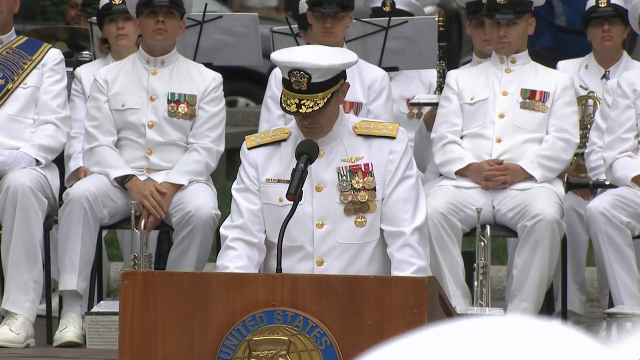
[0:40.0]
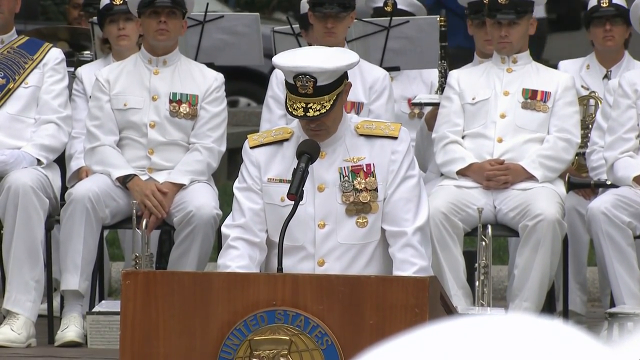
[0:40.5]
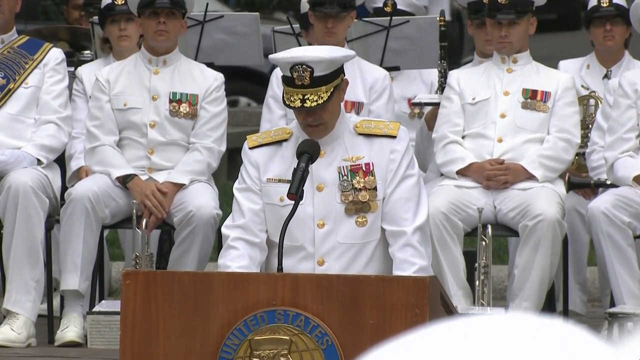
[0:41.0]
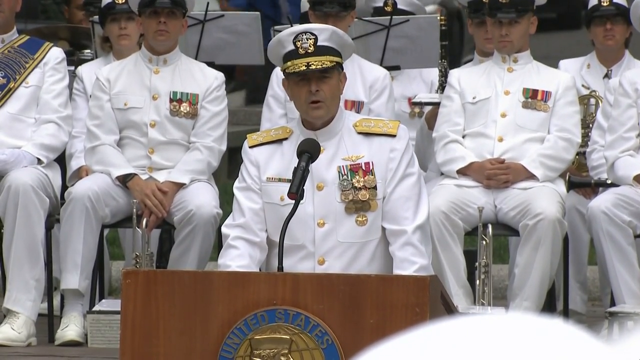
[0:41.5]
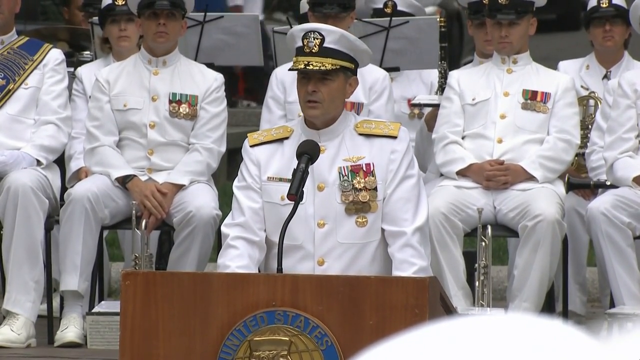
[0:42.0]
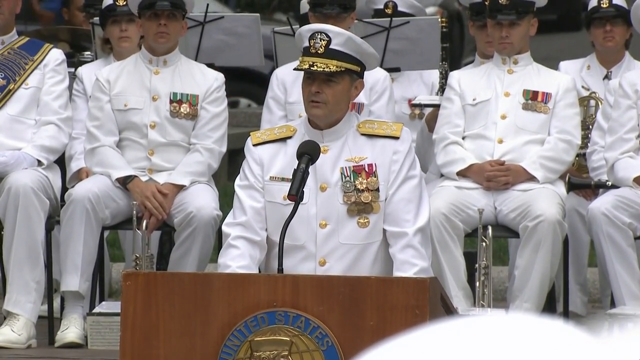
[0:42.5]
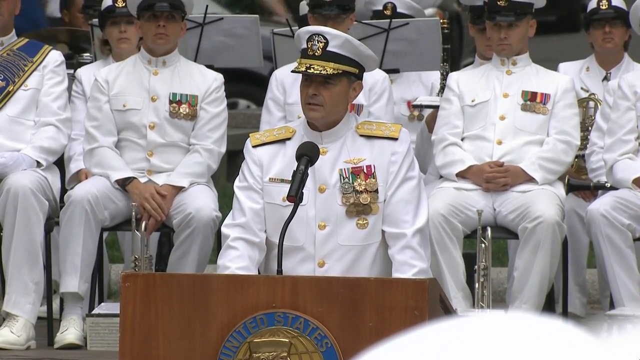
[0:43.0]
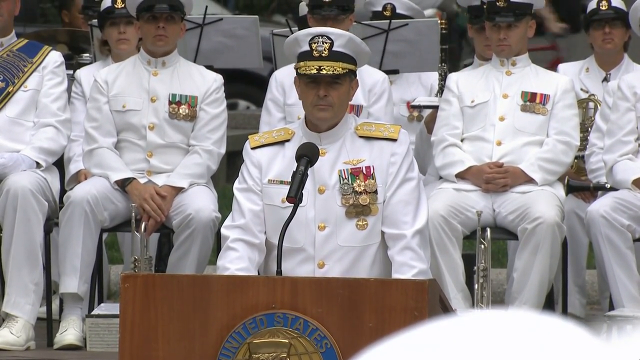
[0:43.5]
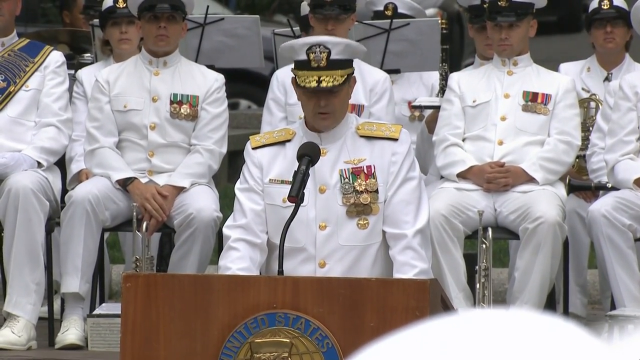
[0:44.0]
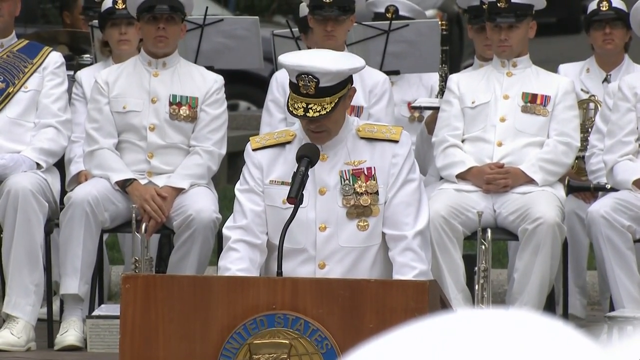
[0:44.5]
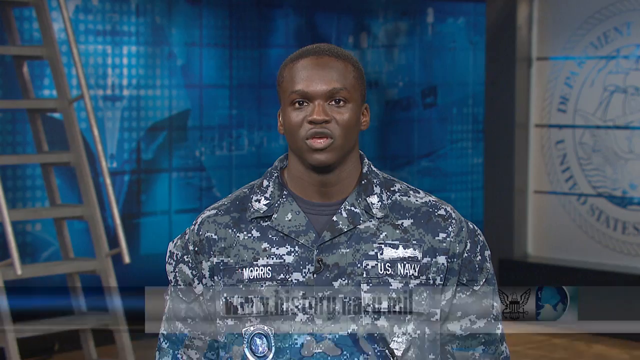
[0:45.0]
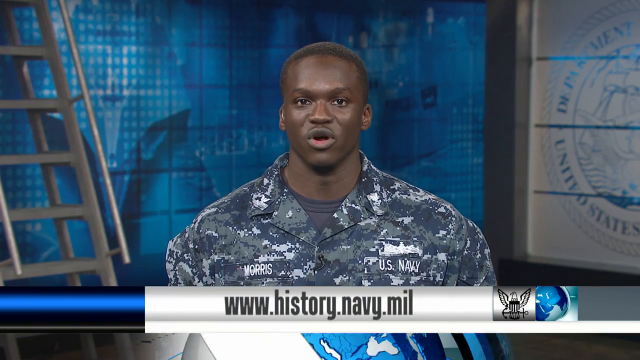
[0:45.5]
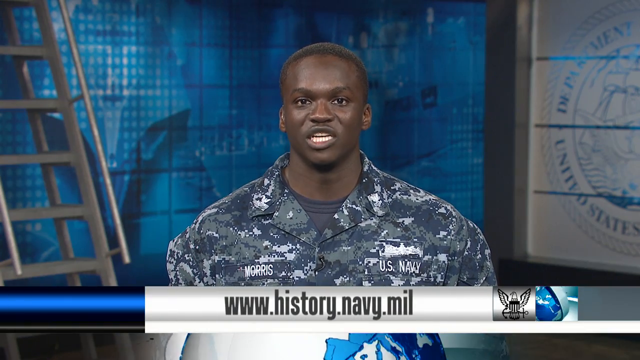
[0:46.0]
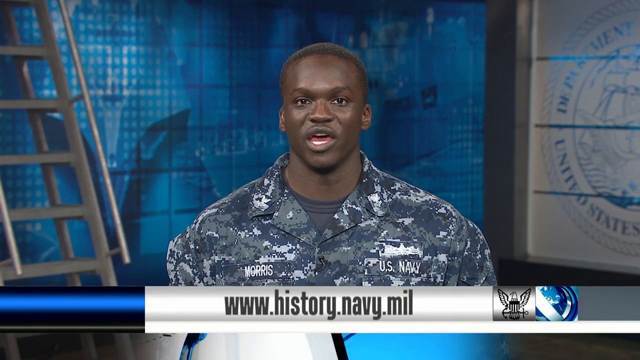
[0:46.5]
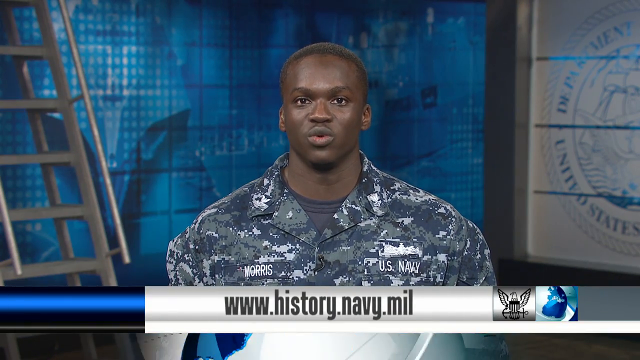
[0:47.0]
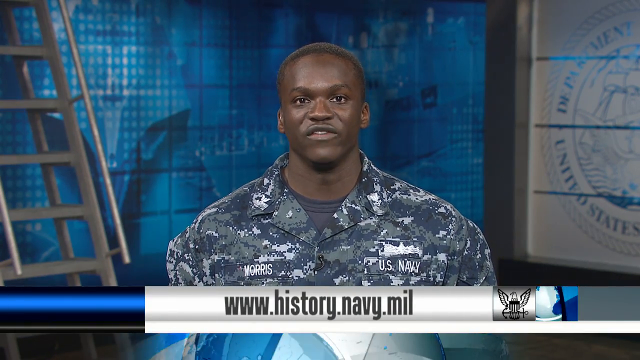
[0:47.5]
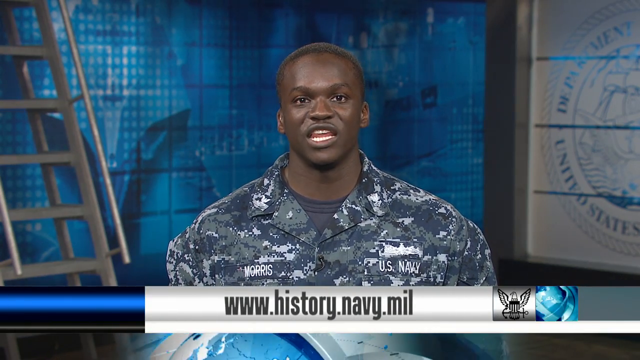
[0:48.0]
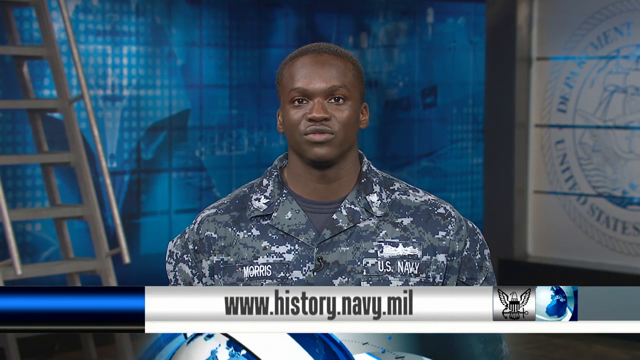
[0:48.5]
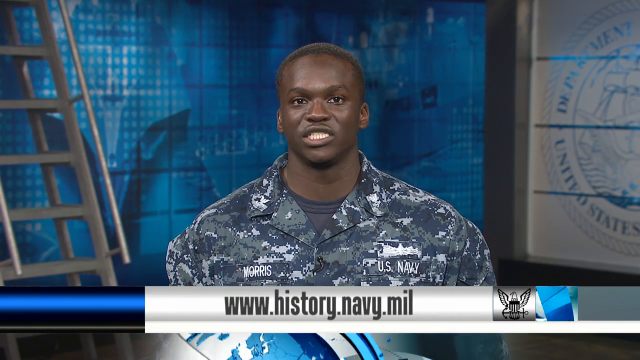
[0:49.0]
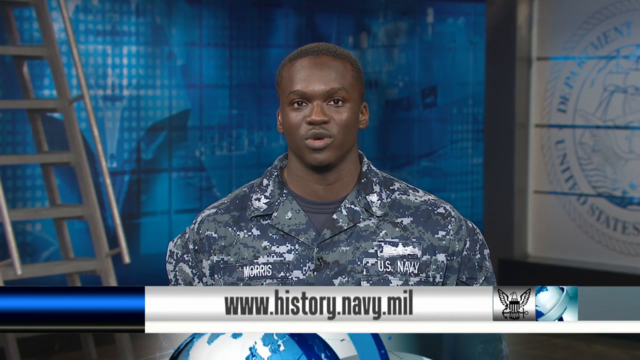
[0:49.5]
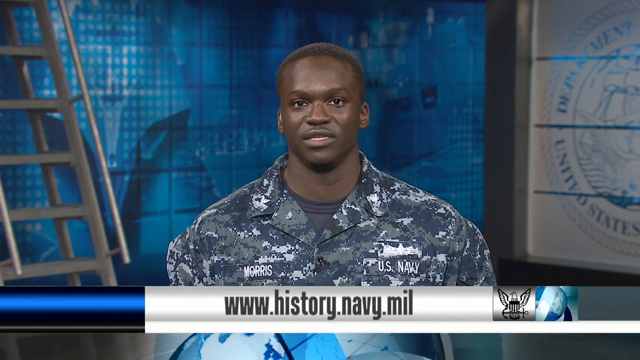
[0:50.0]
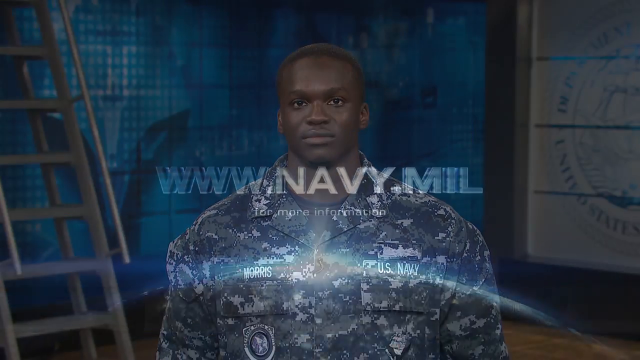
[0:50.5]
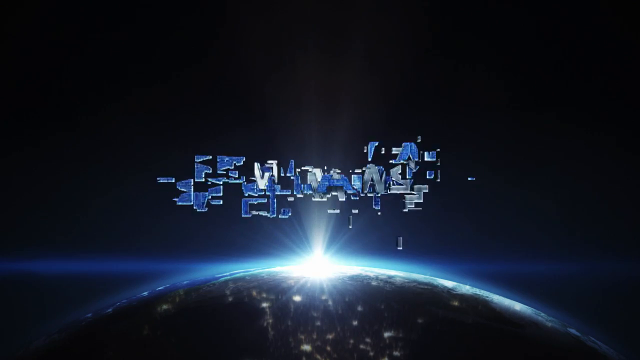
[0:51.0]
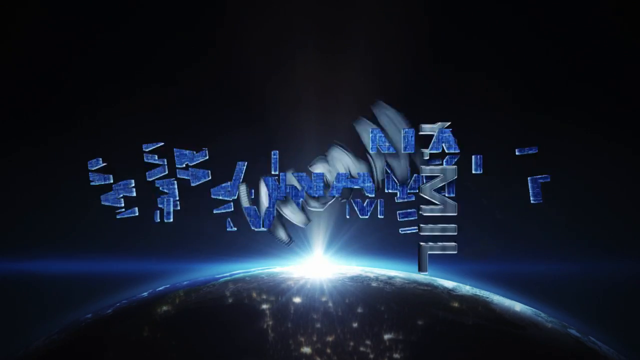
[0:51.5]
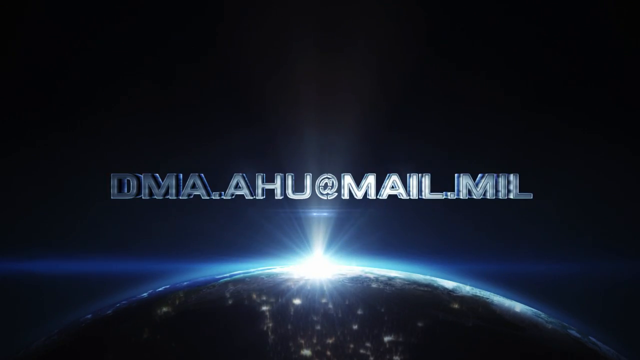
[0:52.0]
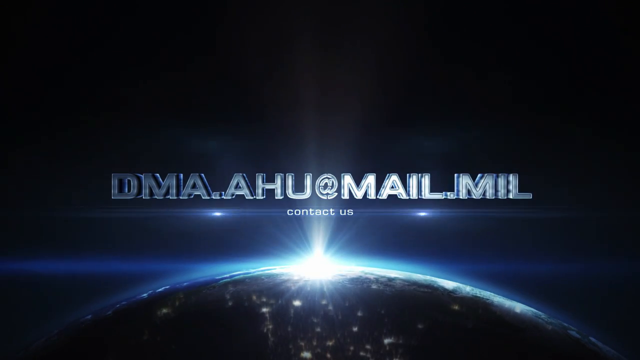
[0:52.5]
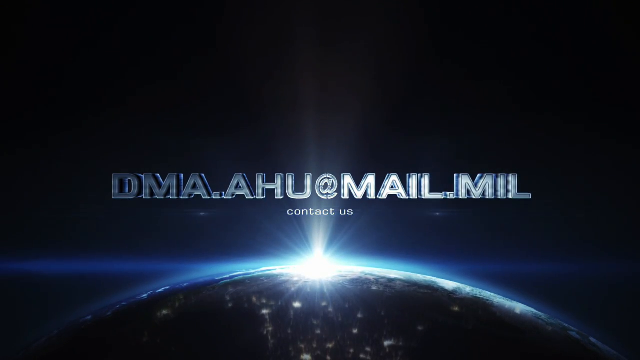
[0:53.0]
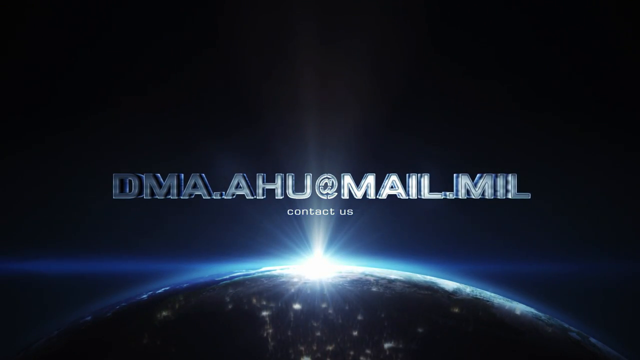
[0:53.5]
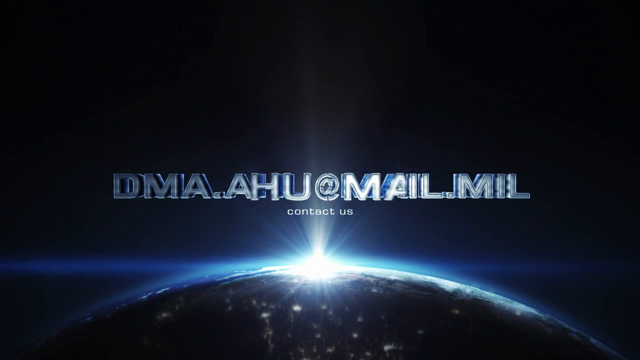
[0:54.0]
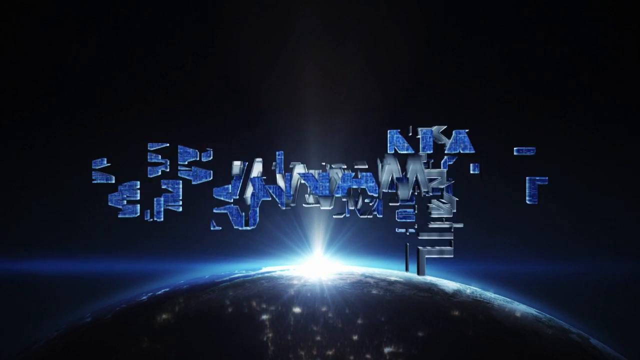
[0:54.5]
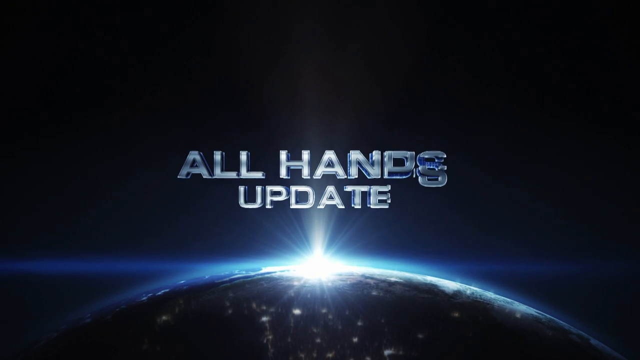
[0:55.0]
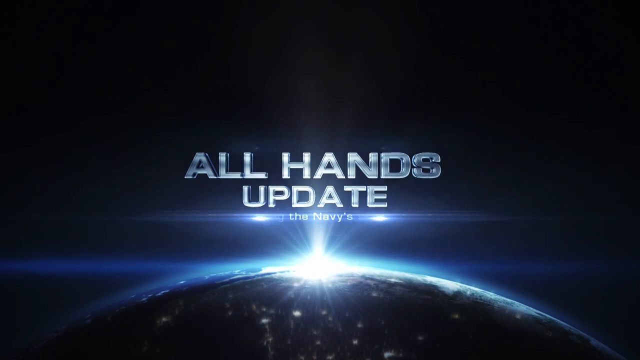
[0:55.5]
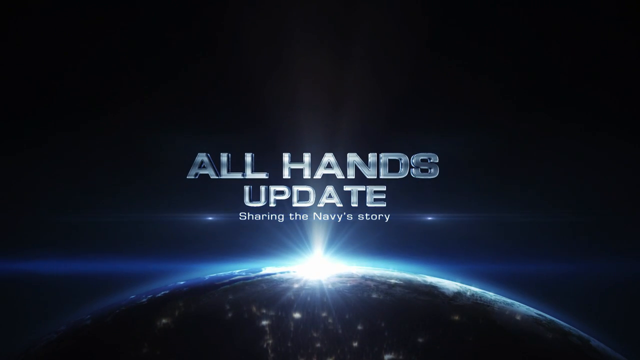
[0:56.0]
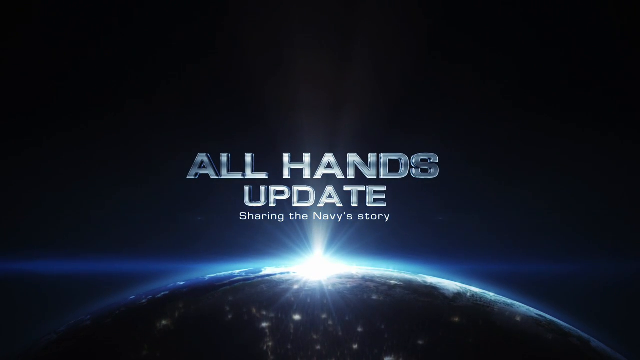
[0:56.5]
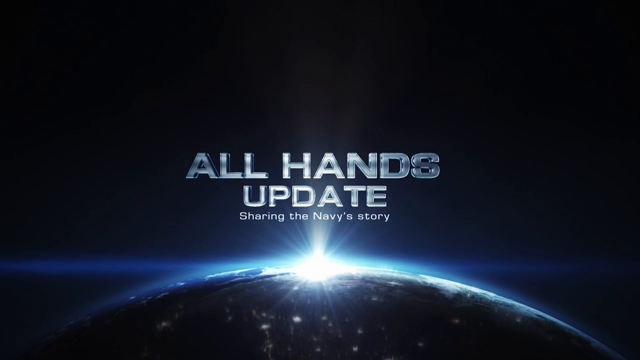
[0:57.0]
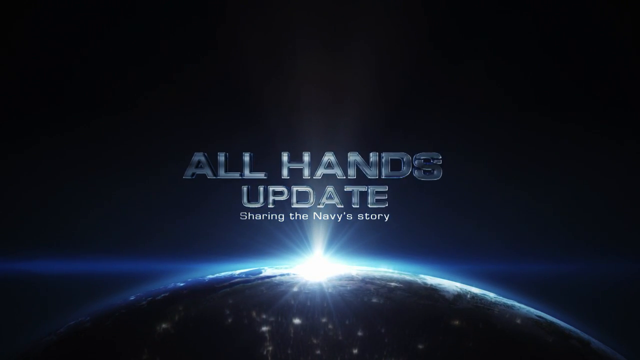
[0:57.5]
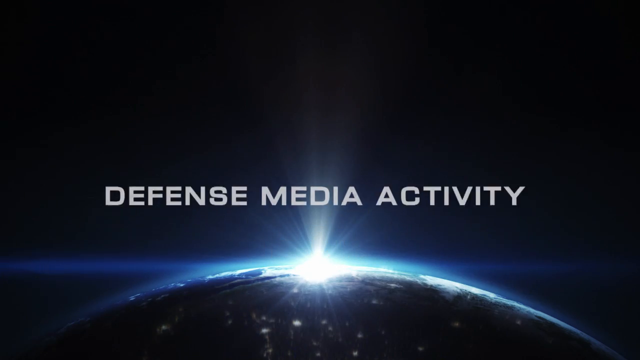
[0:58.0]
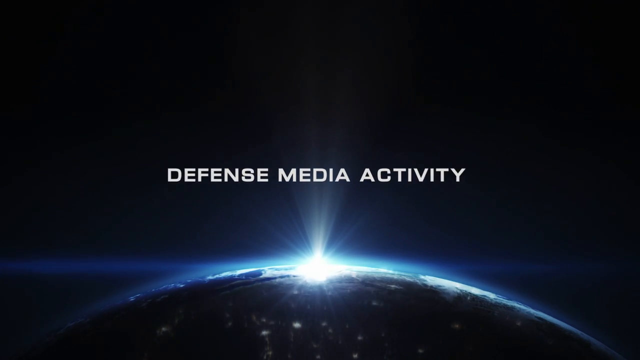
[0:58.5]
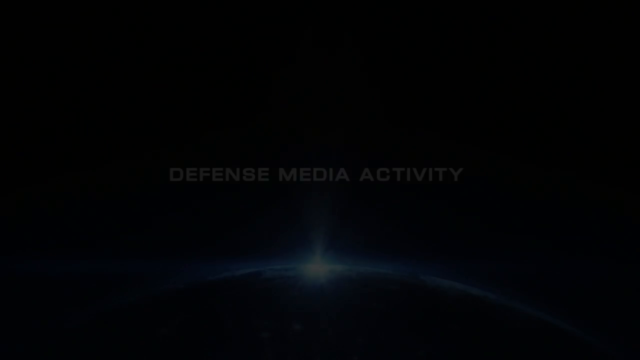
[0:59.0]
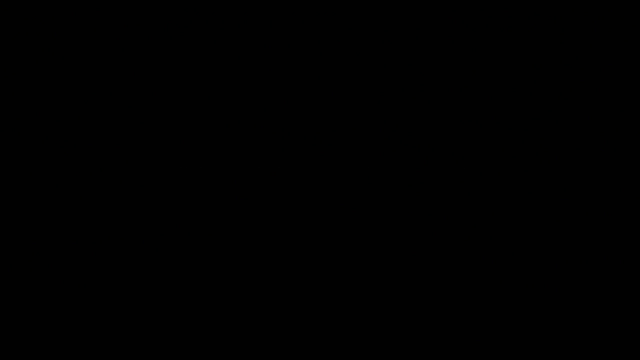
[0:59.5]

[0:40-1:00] He continues speaking at the podium and closes his remarks. www.history.navy.mil appears, and Moore is shown in the U.S. Navy camouflage uniform. Text reads "all hands update sharing the Navy story", apparently from a Navy news platform.